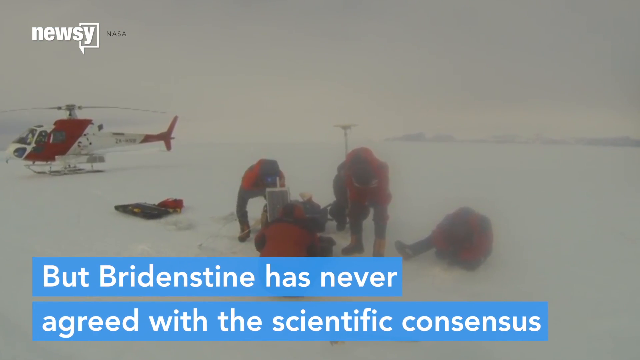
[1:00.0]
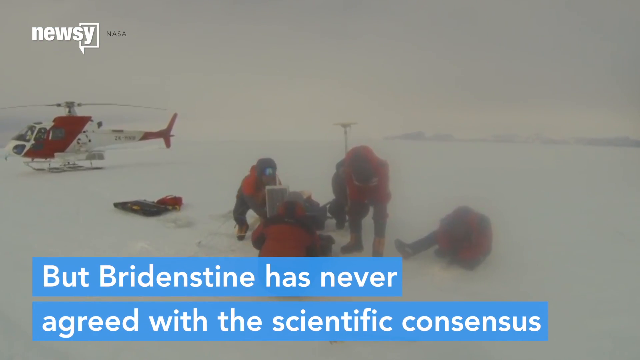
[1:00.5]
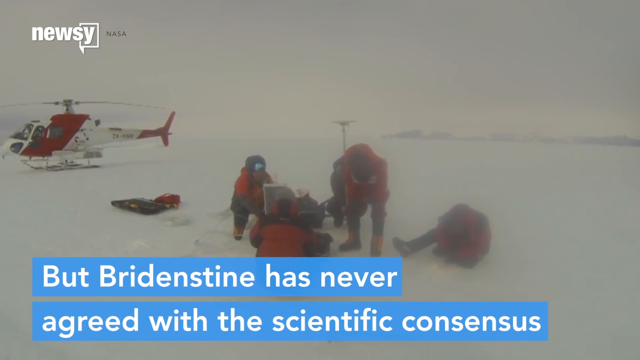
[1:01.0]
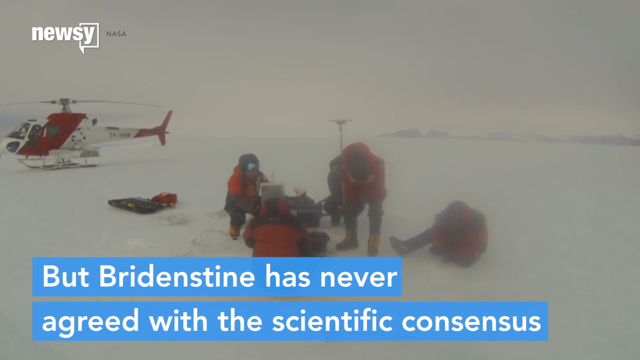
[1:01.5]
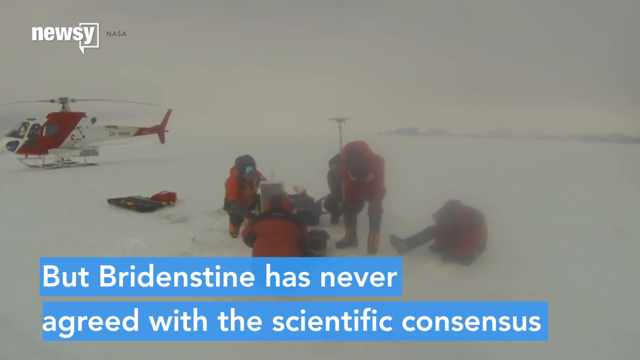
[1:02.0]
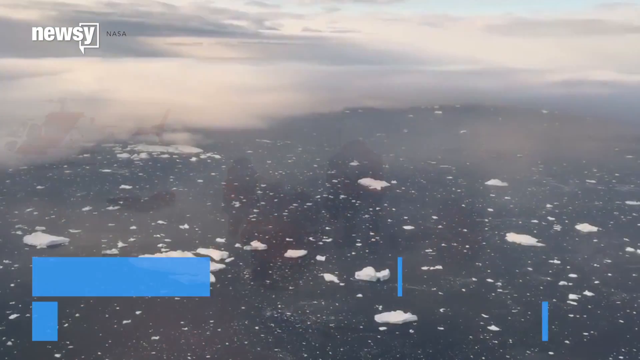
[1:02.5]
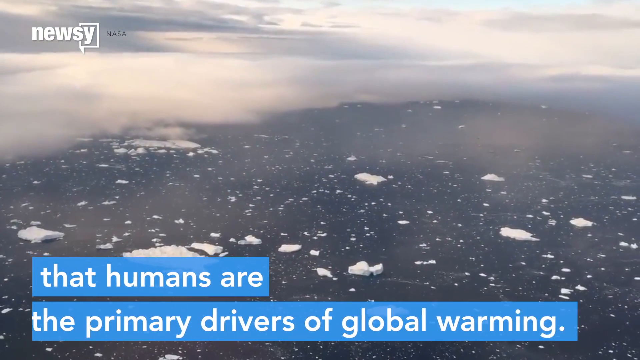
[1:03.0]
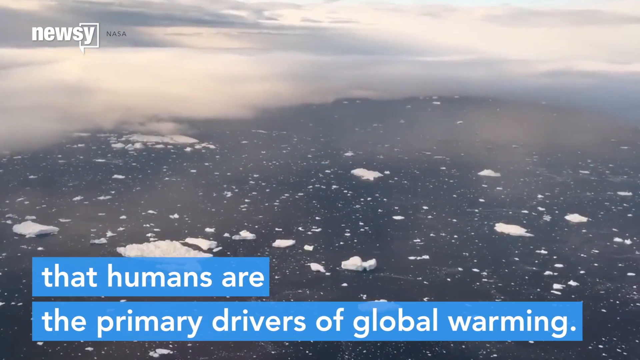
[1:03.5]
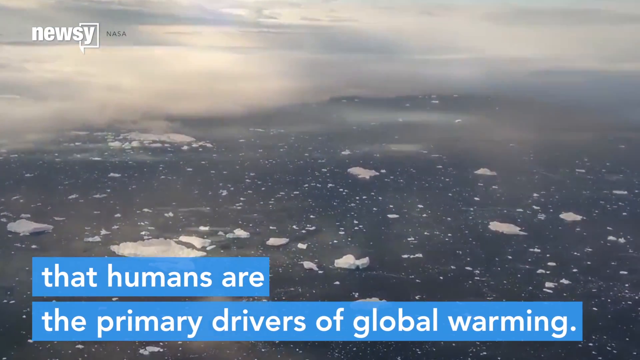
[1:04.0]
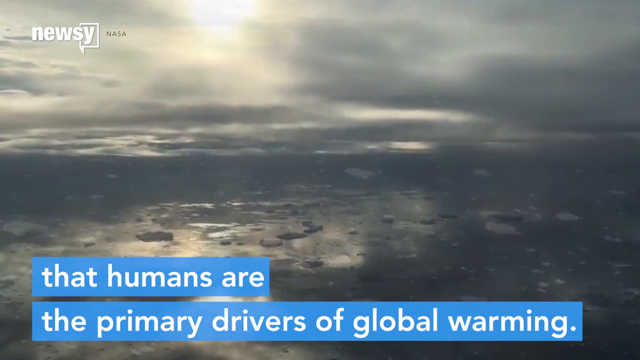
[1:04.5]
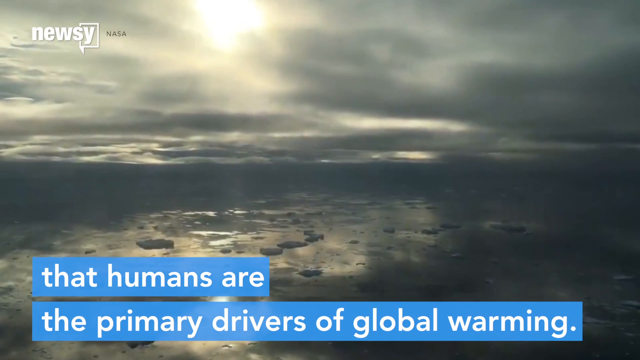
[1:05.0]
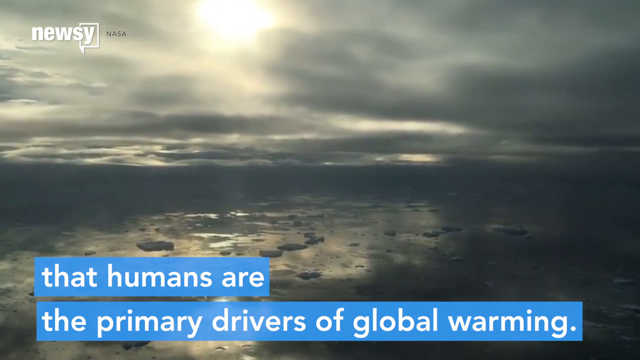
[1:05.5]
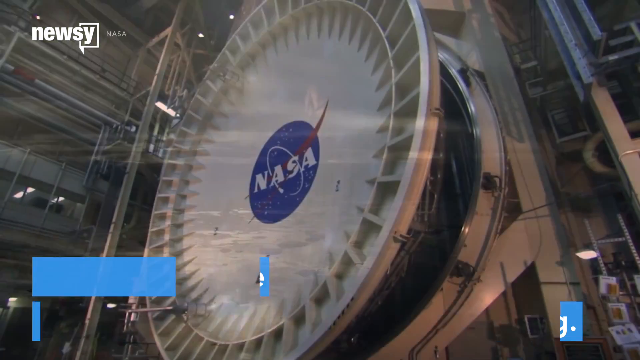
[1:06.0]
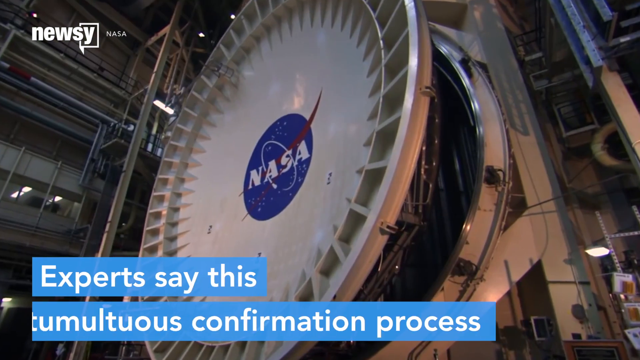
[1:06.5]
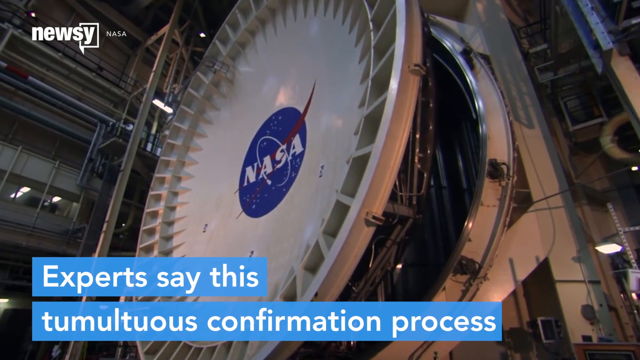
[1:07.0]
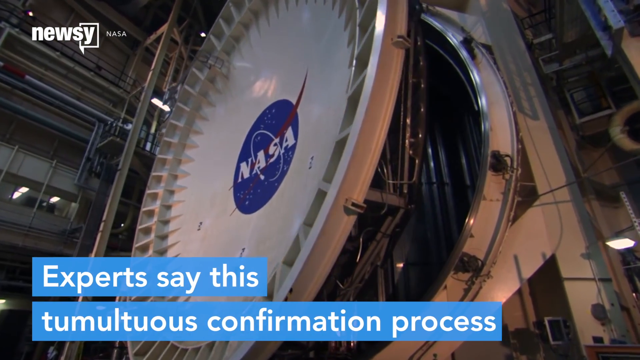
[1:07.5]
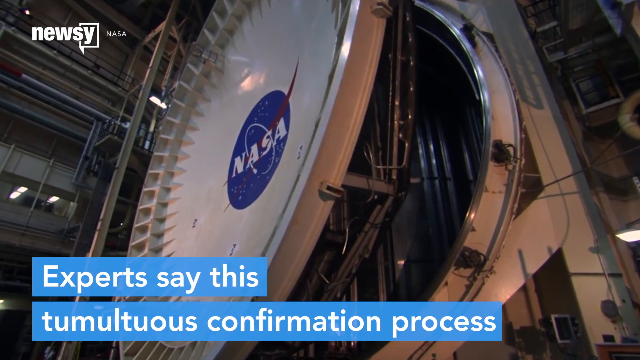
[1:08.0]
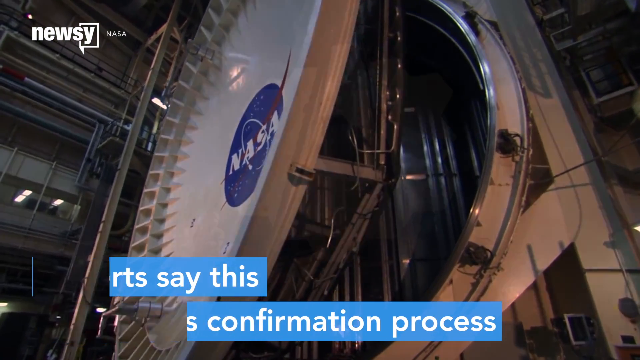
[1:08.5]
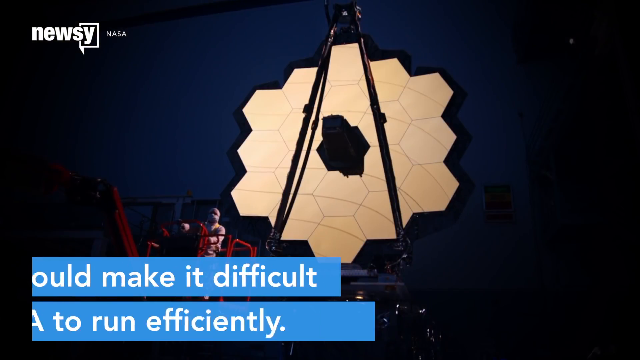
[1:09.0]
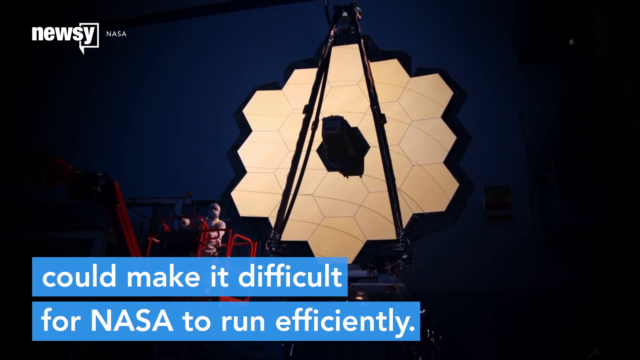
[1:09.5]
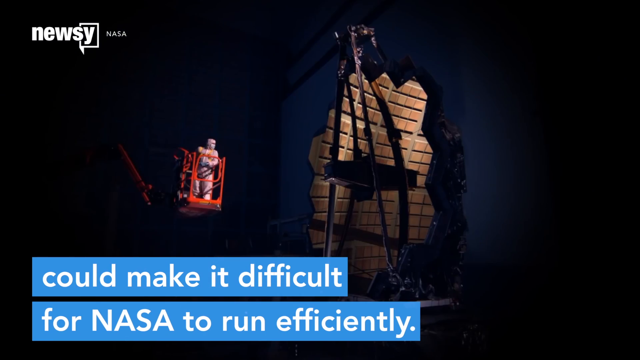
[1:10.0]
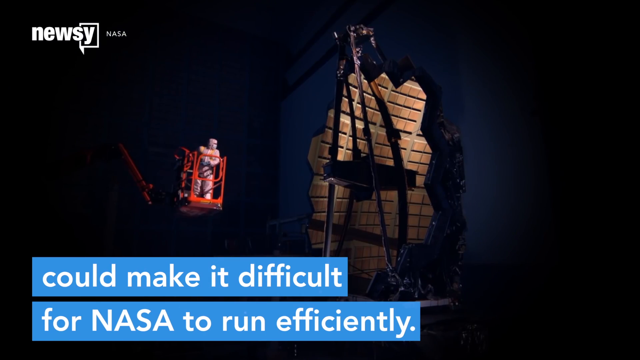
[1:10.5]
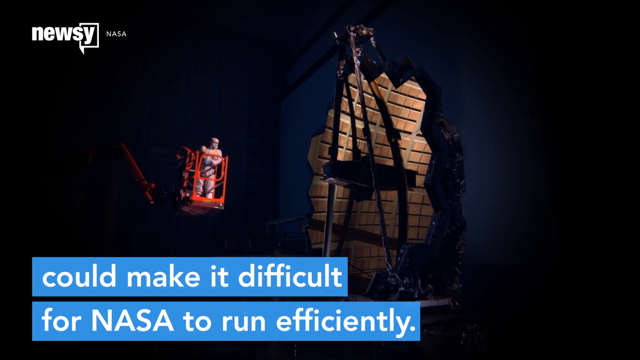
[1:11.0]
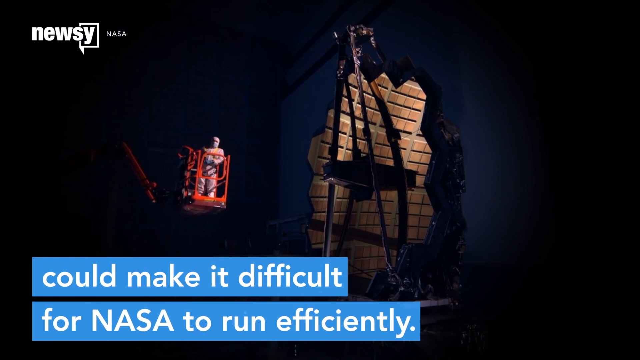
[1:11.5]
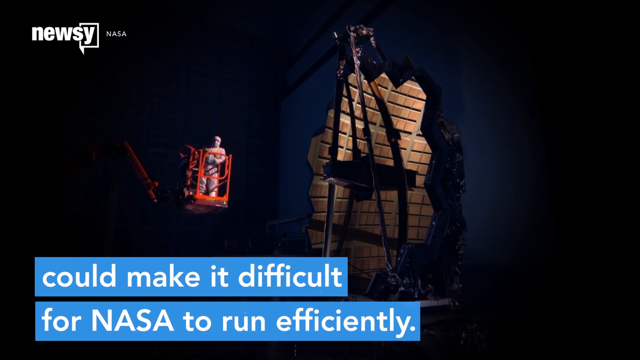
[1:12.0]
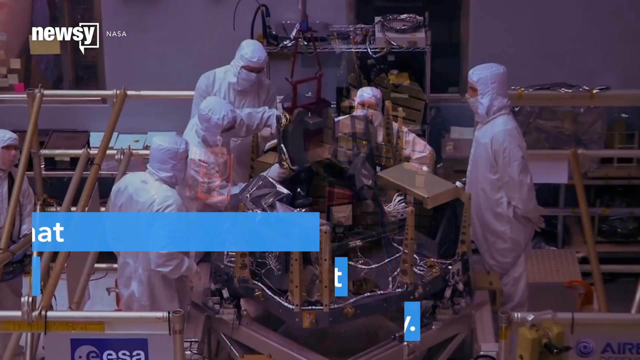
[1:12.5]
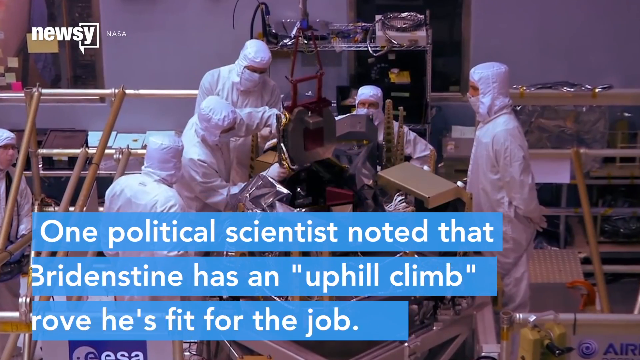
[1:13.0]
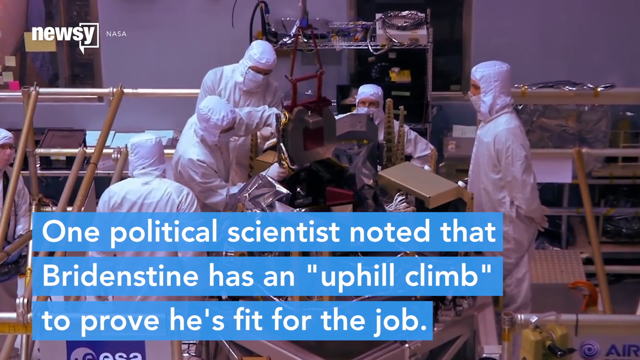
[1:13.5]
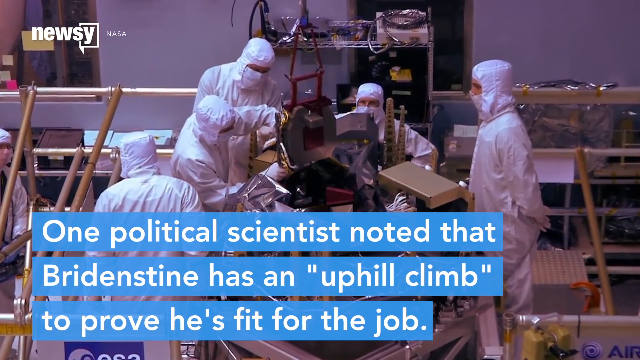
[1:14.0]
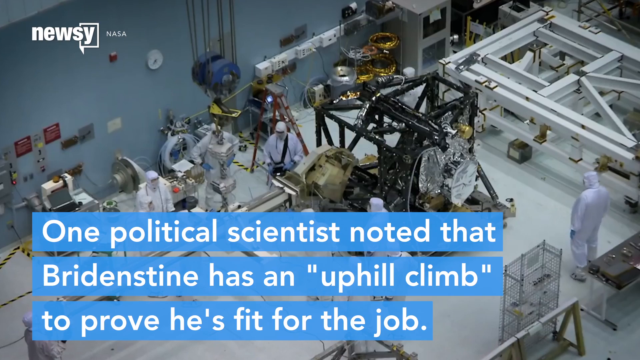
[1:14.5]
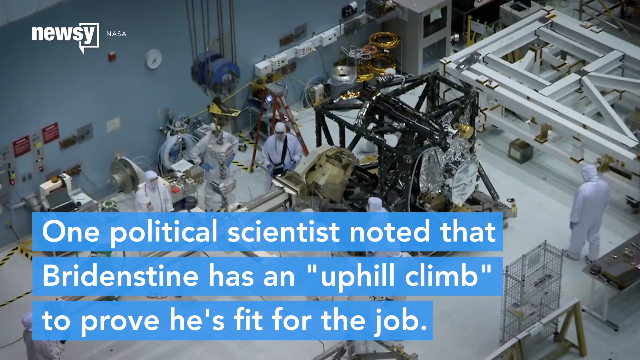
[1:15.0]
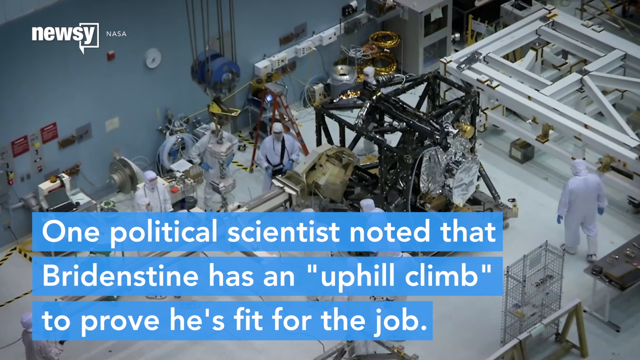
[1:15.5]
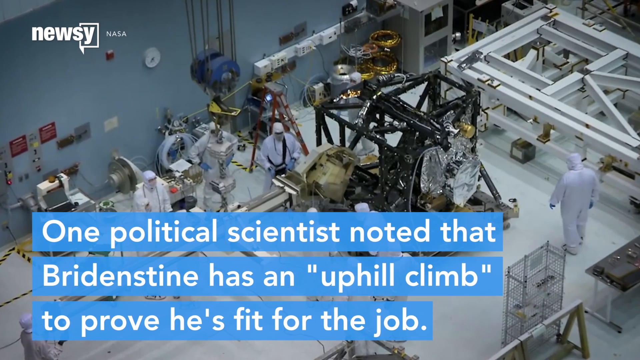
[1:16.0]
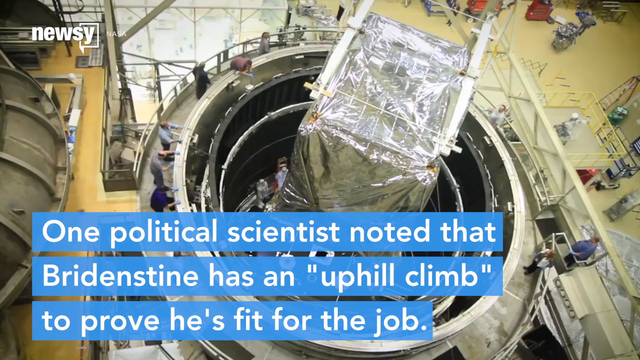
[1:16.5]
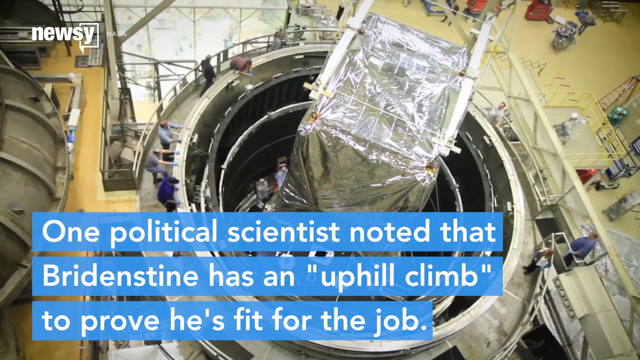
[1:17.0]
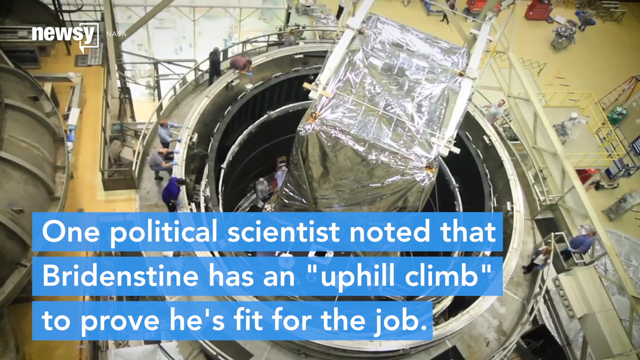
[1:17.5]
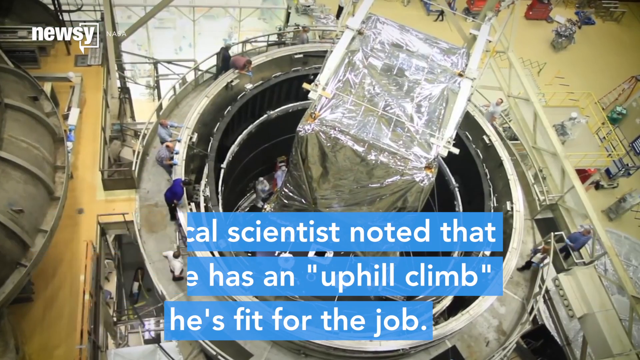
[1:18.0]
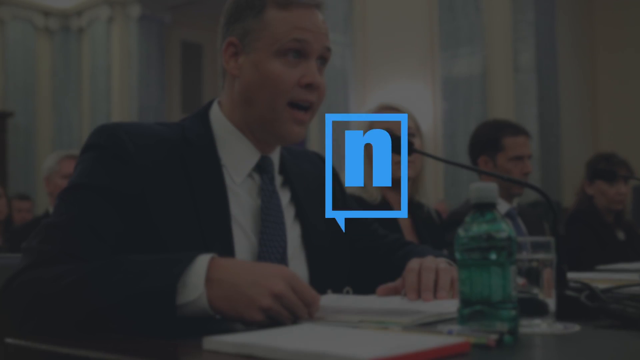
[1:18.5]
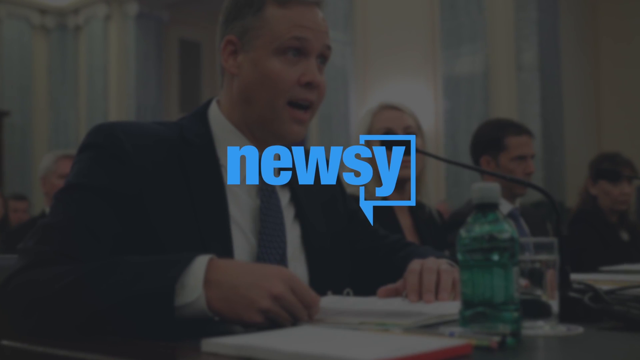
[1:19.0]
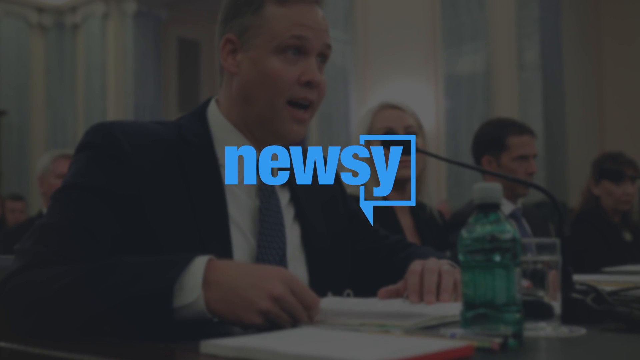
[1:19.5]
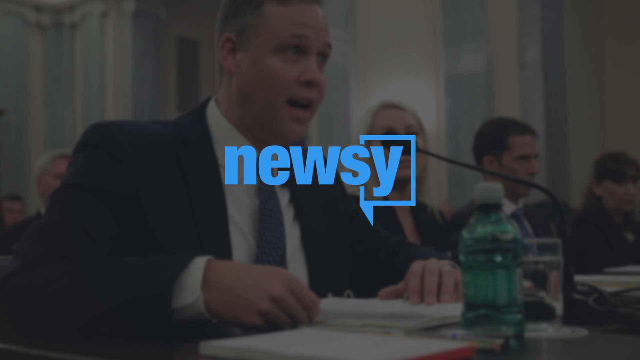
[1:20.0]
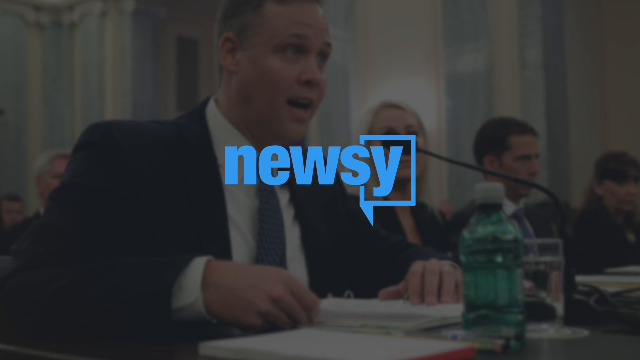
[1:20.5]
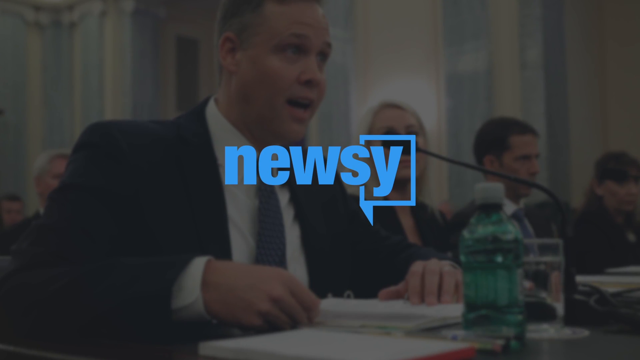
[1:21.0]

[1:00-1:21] People are in a snowy area where the ground is all white snow. About four people wear red and black jackets, black pants and boots; they look to be doing something as they are gathered in one place. In the background is a red and white helicopter that looks like an emergency helicopter, also on the snow. Below, a blue bubble with white writing reads "But Brightstein has never agreed with the scientific consensus." An area of water mixed with ice is shown, with a blue bubble at the bottom of the screen in white writing reading "That humans are the primary drivers of global warming." A sky with clouds follows, then what looks like a satellite dish: circular and white, with a blue NASA logo with white writing in the middle. A blue bubble at the bottom has writing that includes "CONFIRMATION PROCESS could make it difficult for NASA to run efficiently." Someone in white attire on top of a crane is moved toward a structure. Then multiple people are at work, seeming to be working on something in their warehouse.